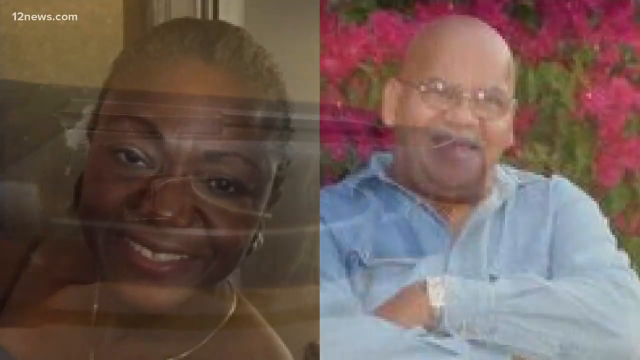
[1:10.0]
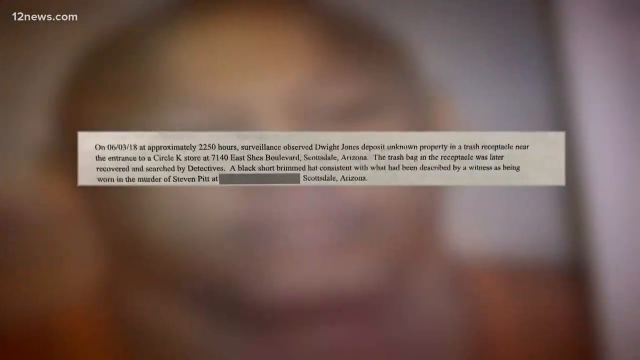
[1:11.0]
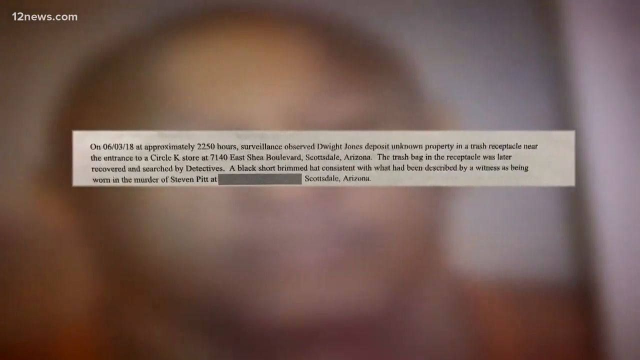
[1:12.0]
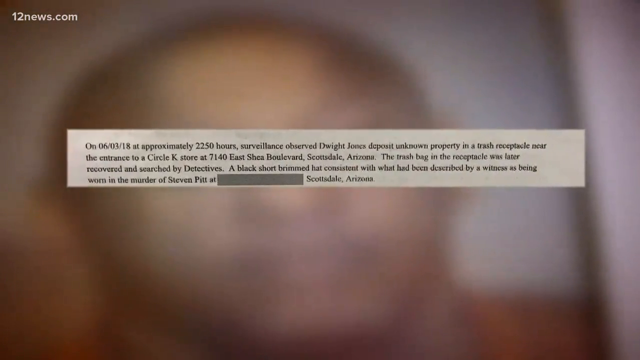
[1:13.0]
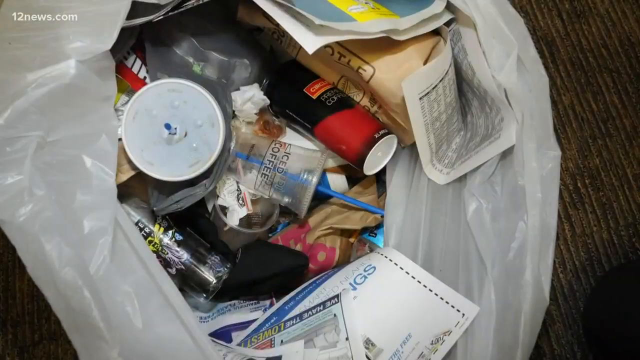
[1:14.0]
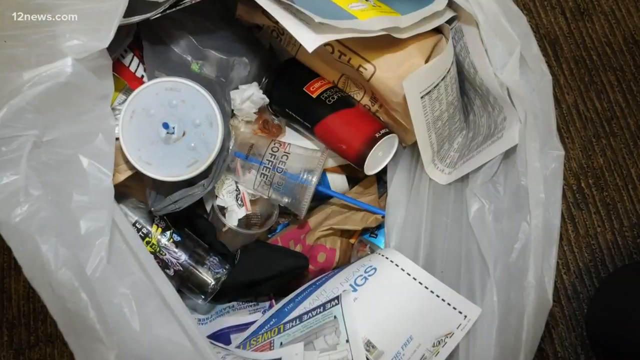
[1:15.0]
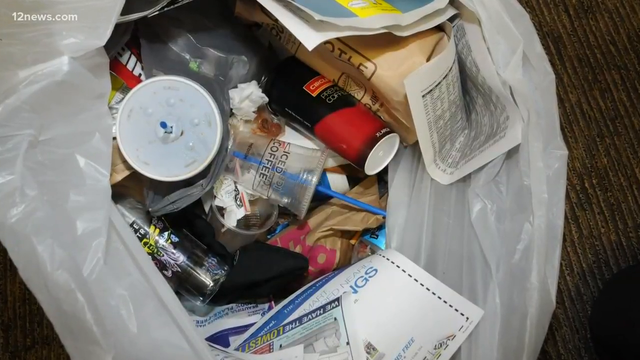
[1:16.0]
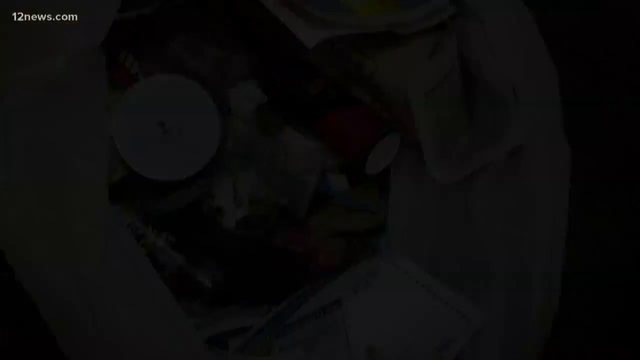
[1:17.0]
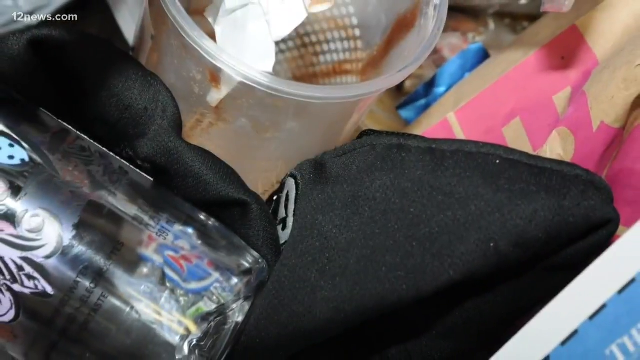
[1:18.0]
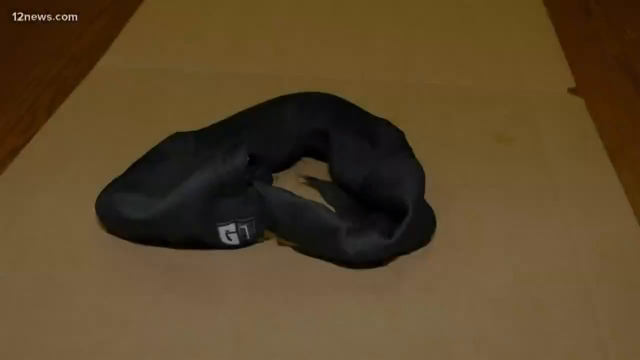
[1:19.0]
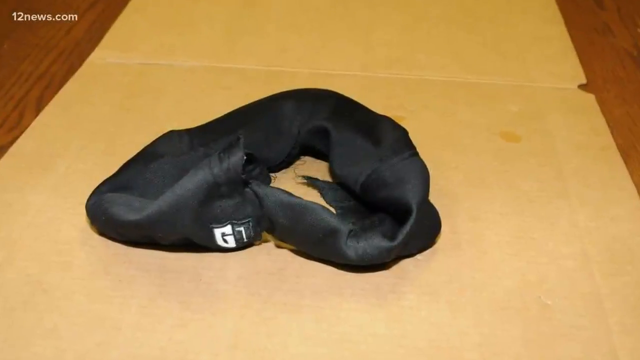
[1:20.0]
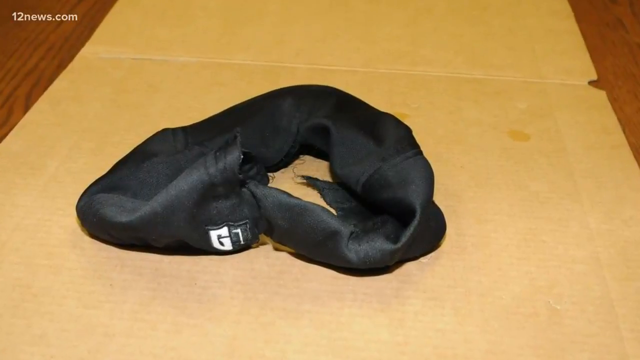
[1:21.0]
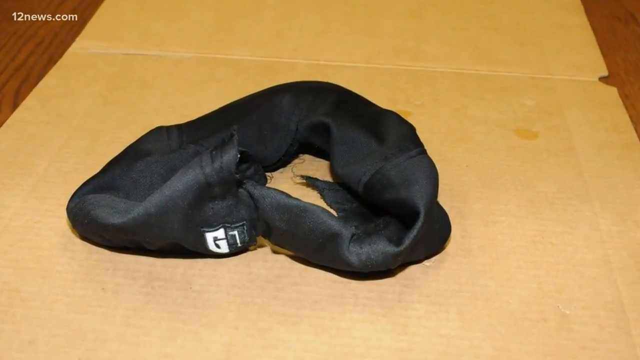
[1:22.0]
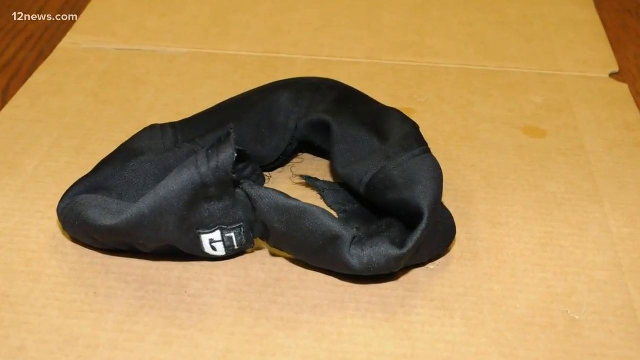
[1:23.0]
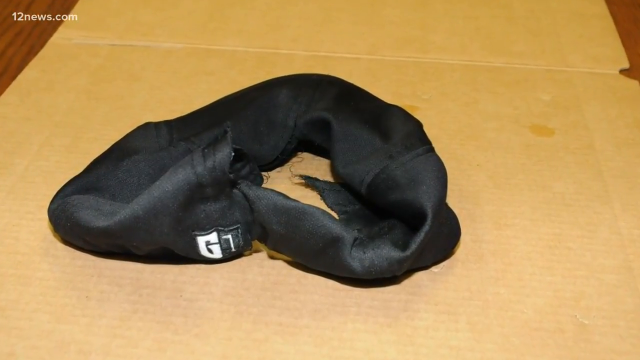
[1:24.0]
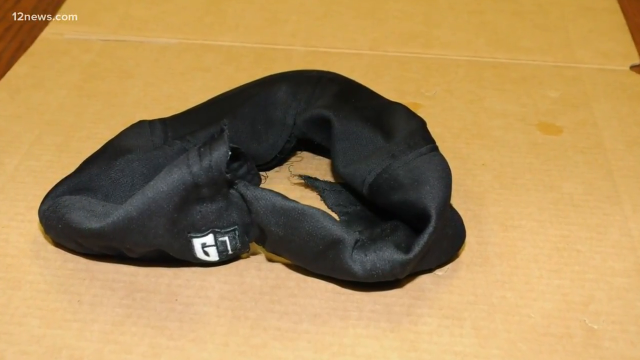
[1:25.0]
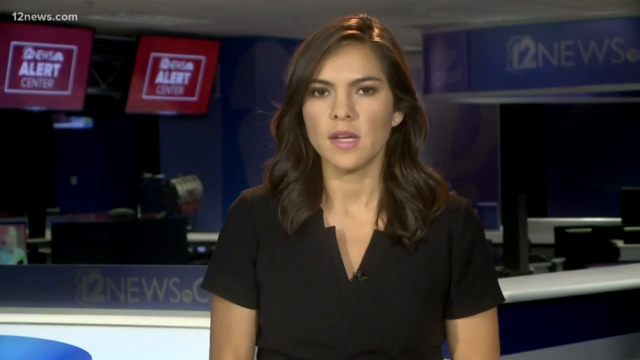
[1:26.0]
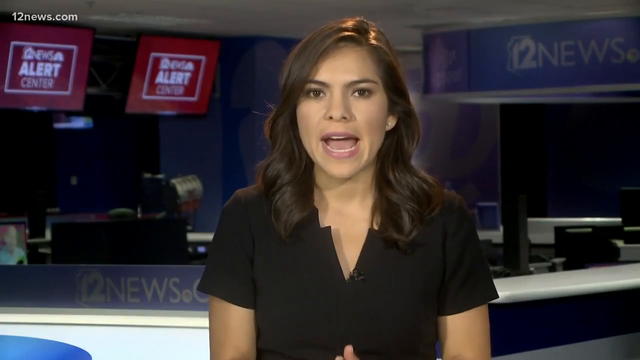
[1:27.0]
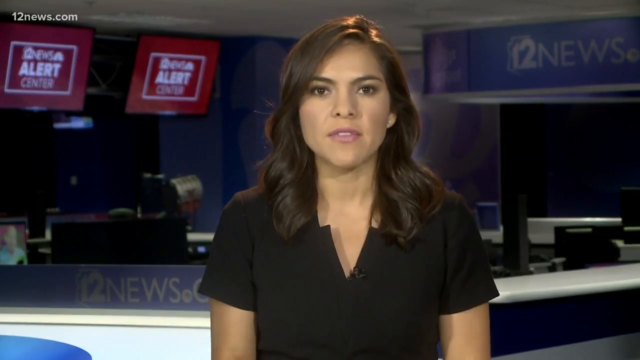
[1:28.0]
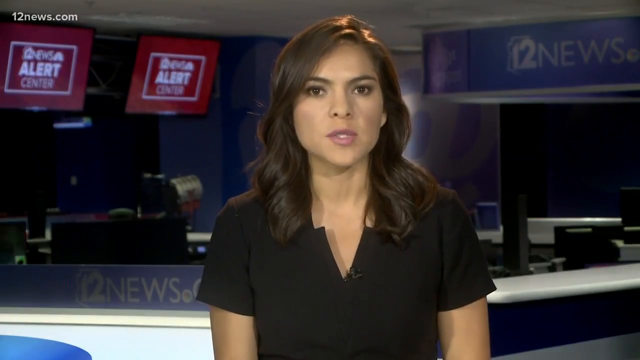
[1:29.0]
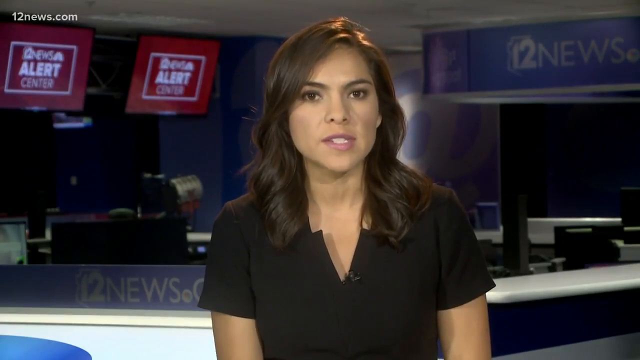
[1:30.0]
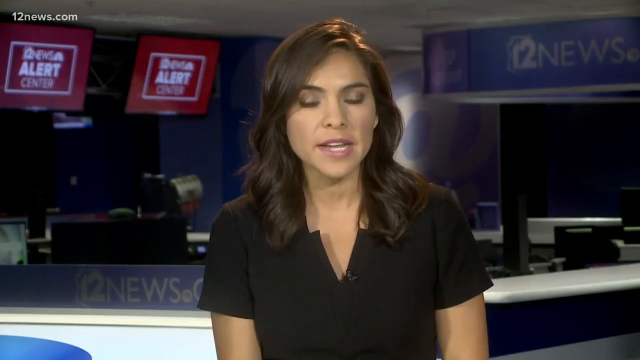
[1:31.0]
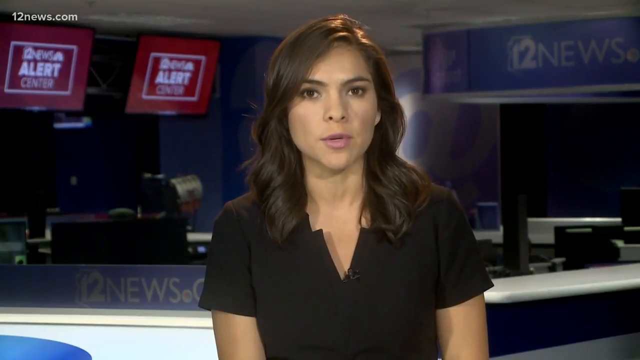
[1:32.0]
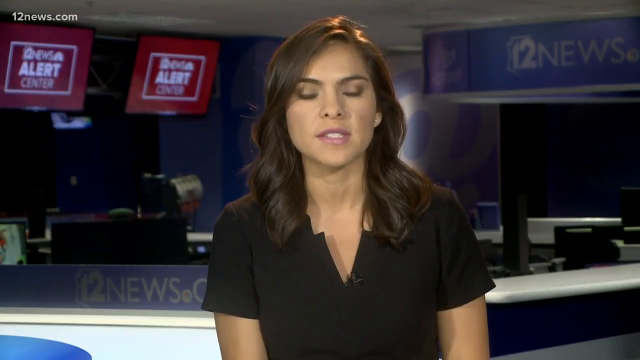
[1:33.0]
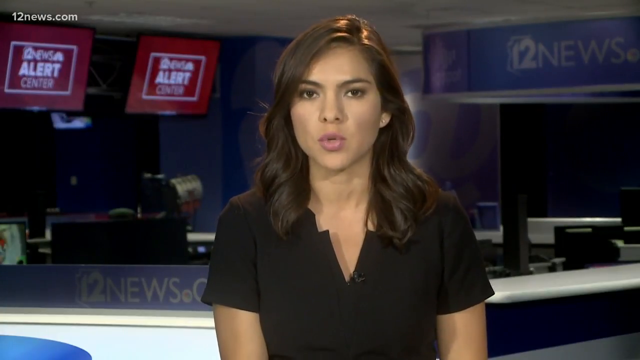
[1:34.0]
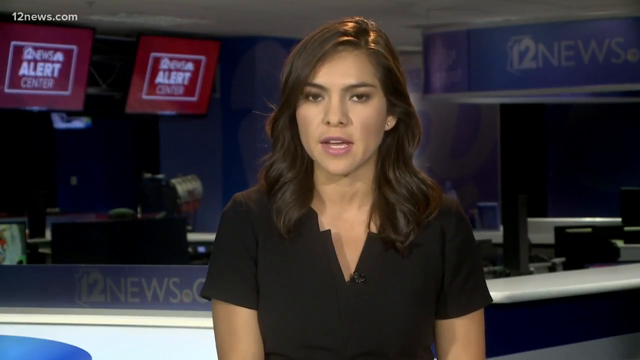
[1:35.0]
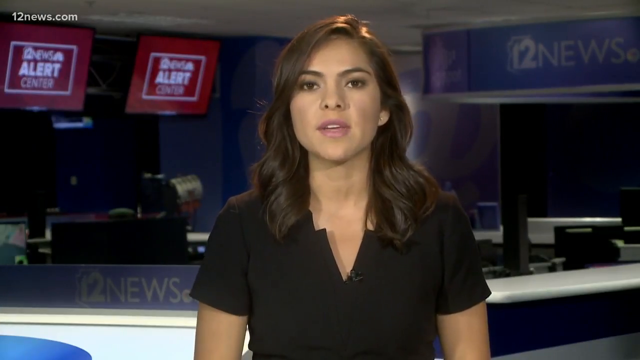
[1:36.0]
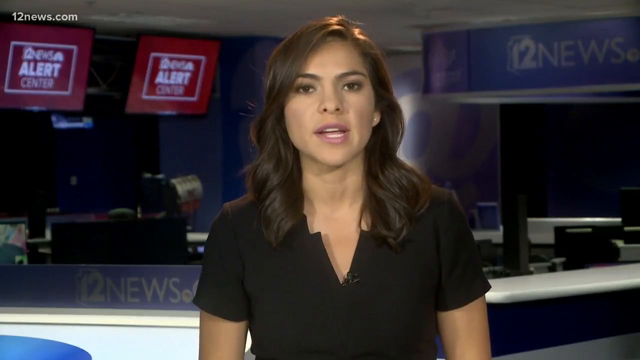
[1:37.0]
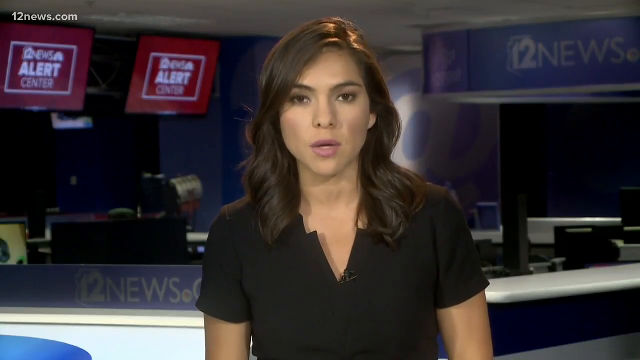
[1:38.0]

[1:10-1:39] The 12news.com logo appears in the upper left corner throughout this part of the news report. It begins with a split screen showing a photograph of a Black woman on the left and a light-skinned Black man on the right. The man wears a long-sleeved blue shirt, has his arms folded in front of him, and is smiling. The photos appear transparent, as if overlaid over another image that looks like a gun resting on a table. The screen then changes to show a paragraph from what looks like a police report in a white text bar in the center of the screen, over a blurry background image that looks like a photograph. Next is a close-up of a photograph inside a garbage bag: a white bag open at the top containing plastic coffee cups, a Chipotle bag, and other garbage, viewed from several angles. Then comes what looks like a black scarf resting on a table. The image then switches back to a female news reporter in a studio, speaking directly to the camera, with 12news on the wall behind her on the right.